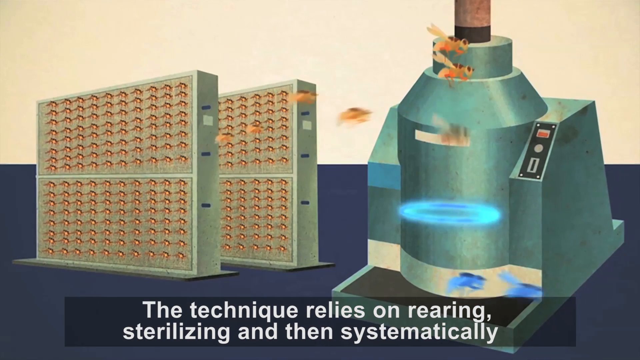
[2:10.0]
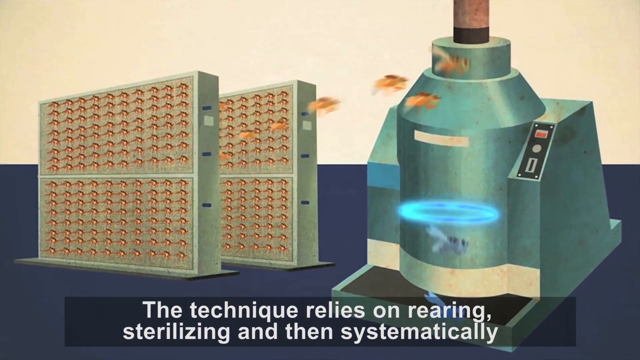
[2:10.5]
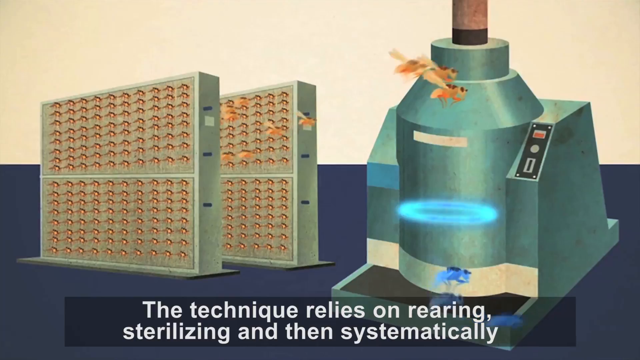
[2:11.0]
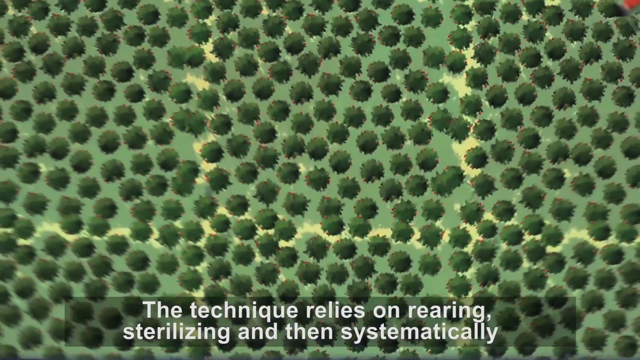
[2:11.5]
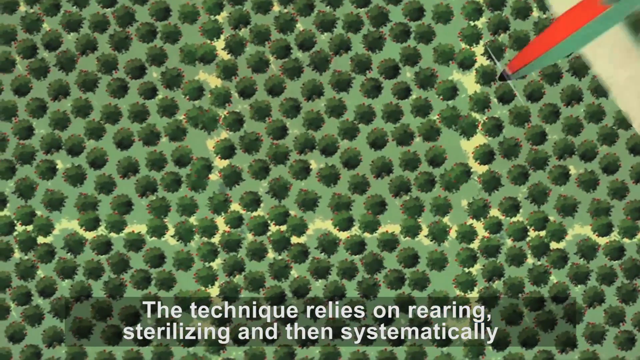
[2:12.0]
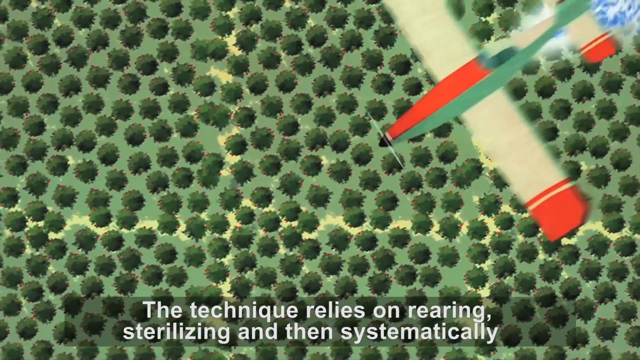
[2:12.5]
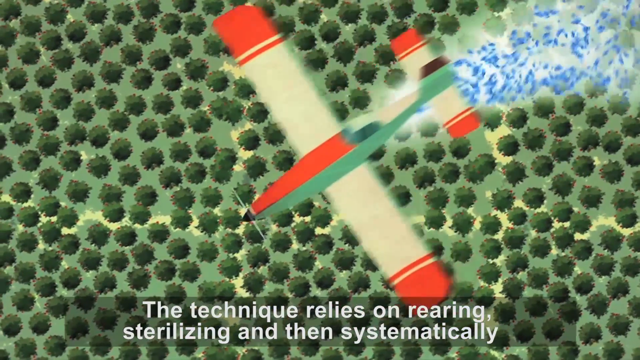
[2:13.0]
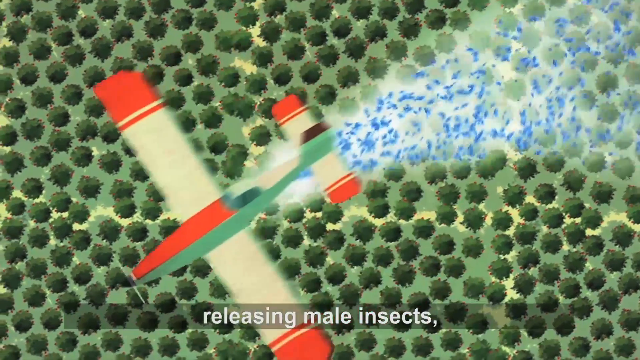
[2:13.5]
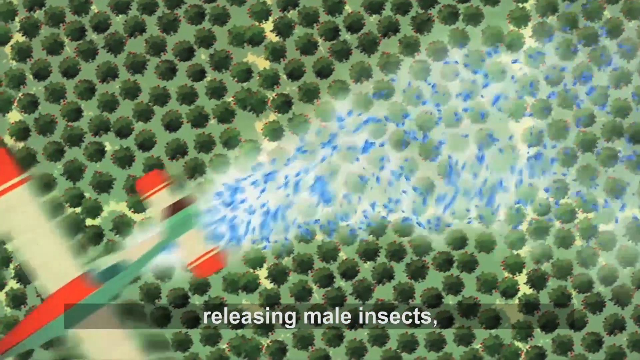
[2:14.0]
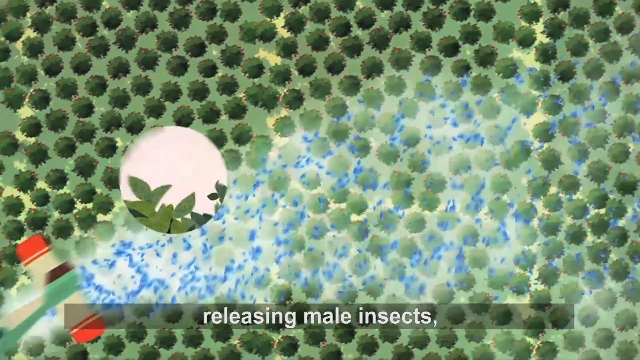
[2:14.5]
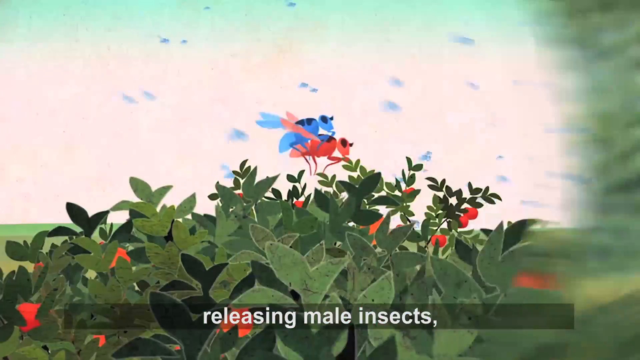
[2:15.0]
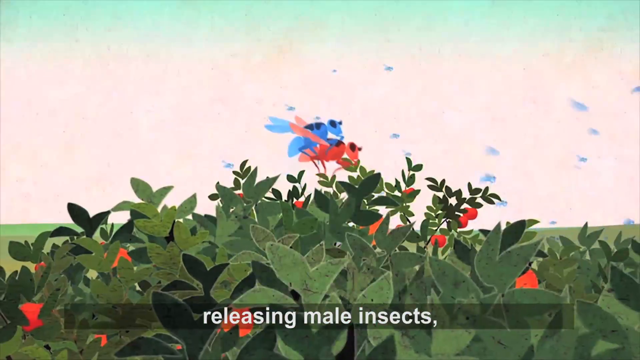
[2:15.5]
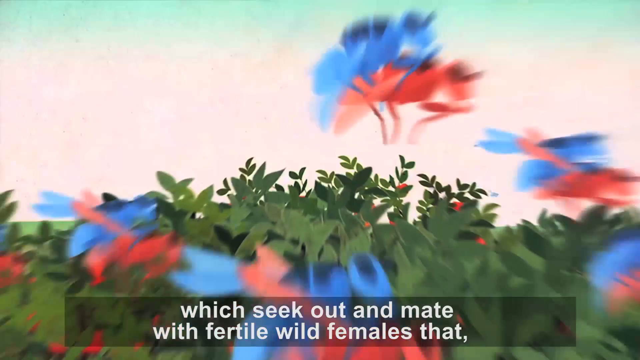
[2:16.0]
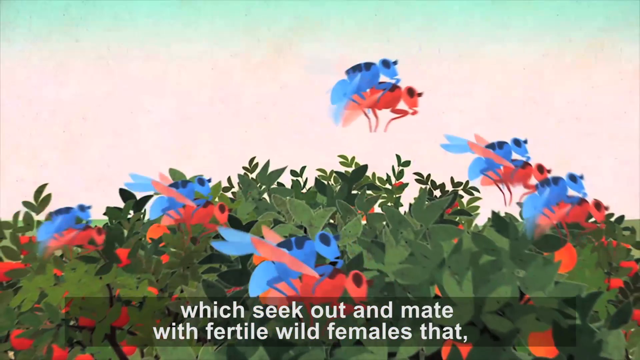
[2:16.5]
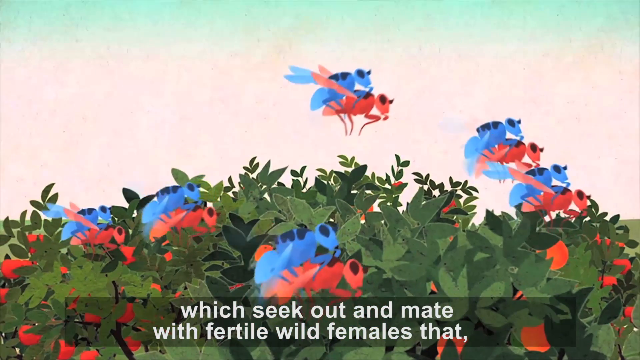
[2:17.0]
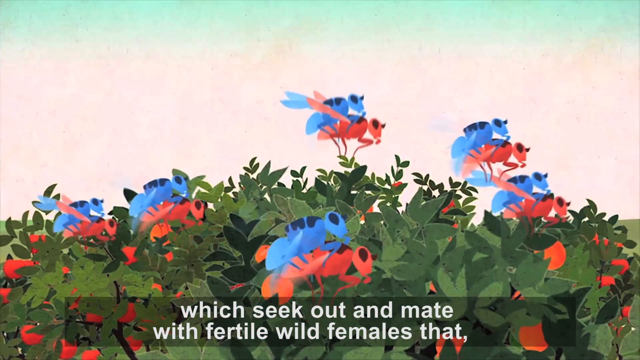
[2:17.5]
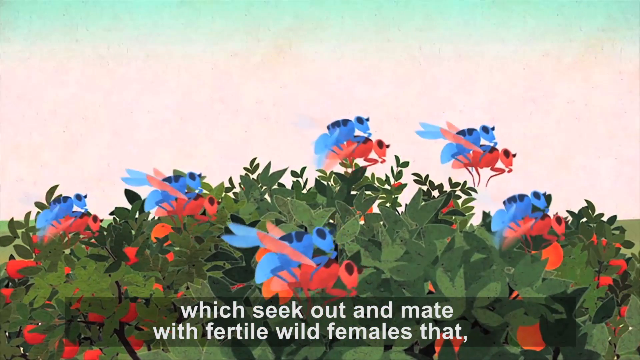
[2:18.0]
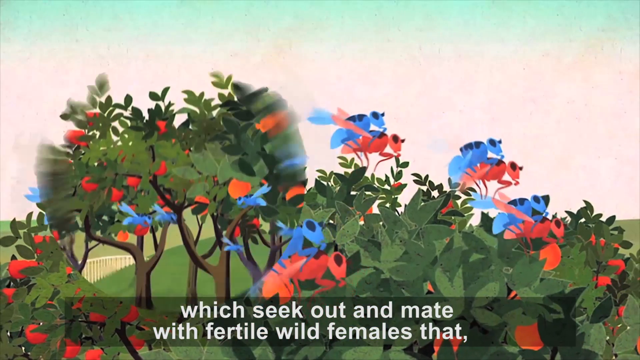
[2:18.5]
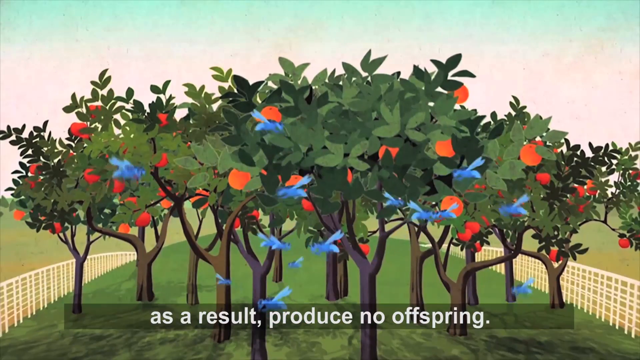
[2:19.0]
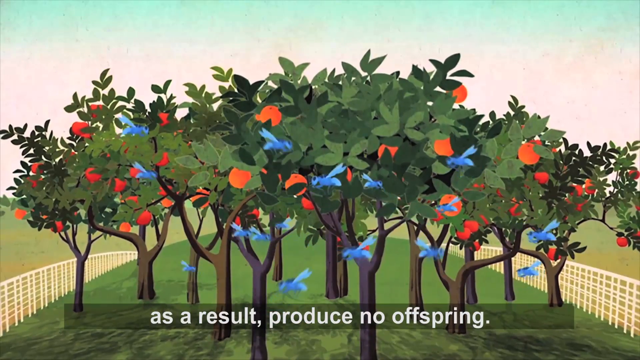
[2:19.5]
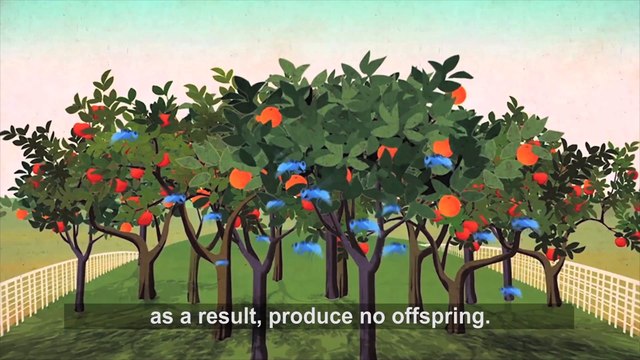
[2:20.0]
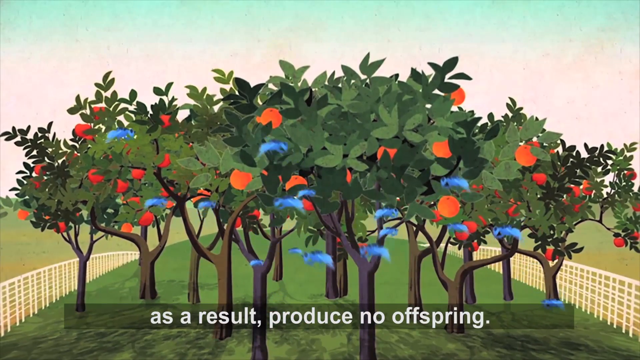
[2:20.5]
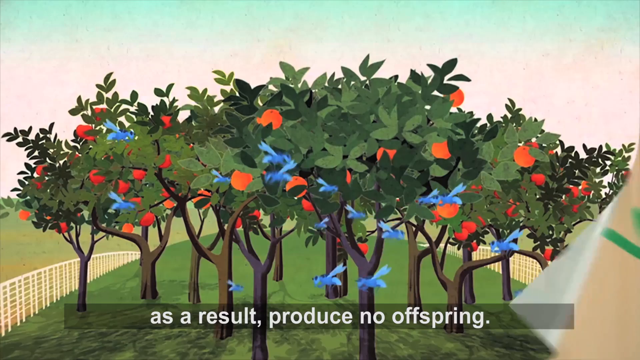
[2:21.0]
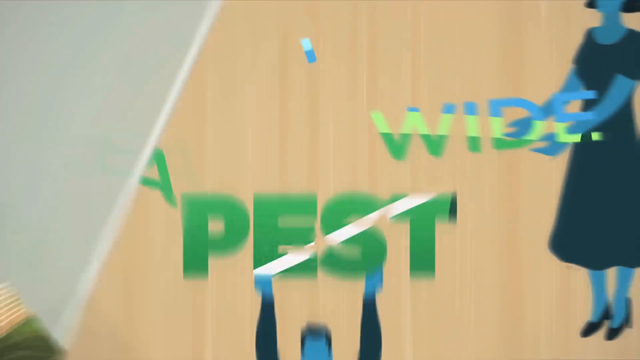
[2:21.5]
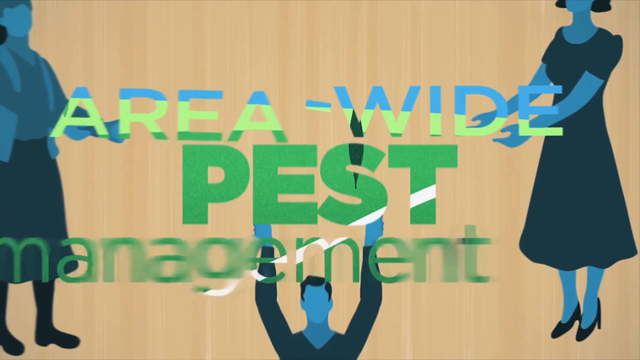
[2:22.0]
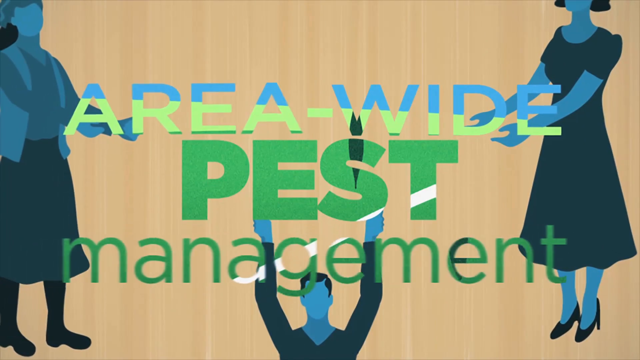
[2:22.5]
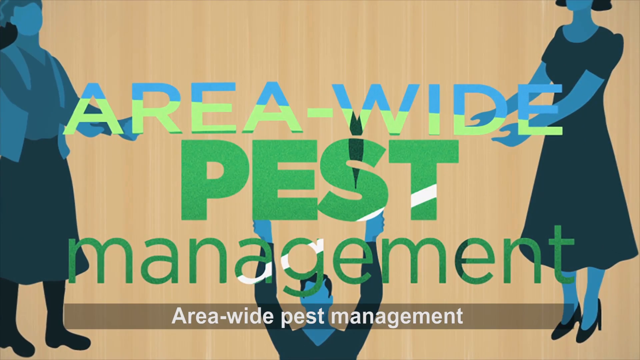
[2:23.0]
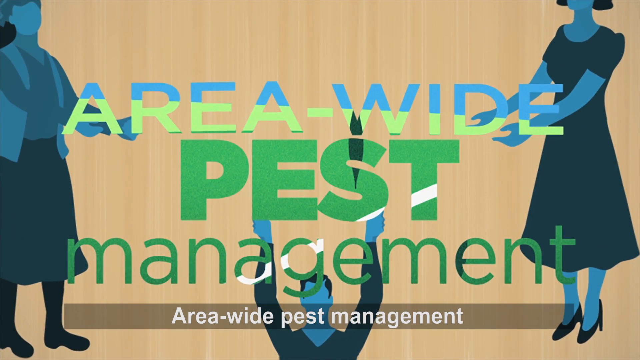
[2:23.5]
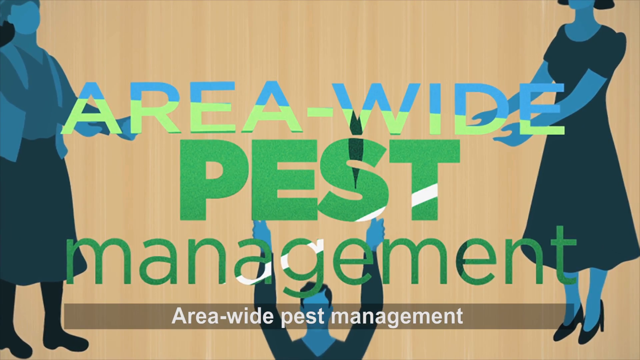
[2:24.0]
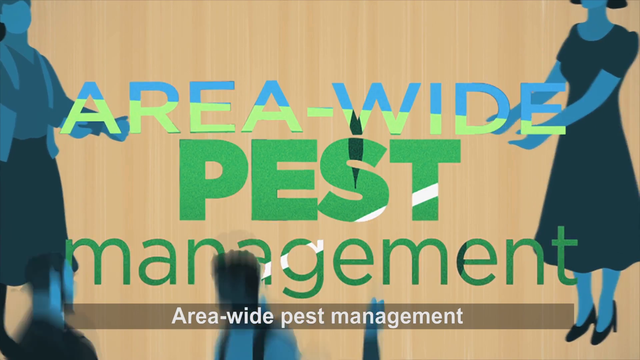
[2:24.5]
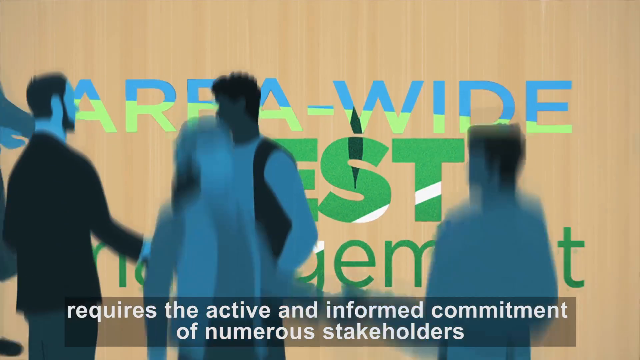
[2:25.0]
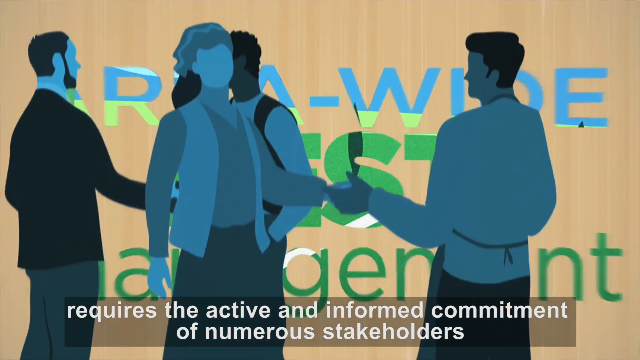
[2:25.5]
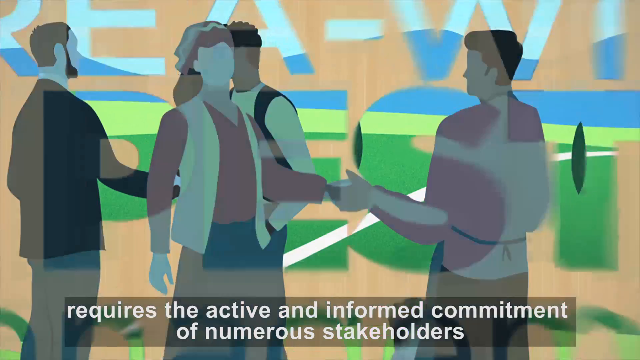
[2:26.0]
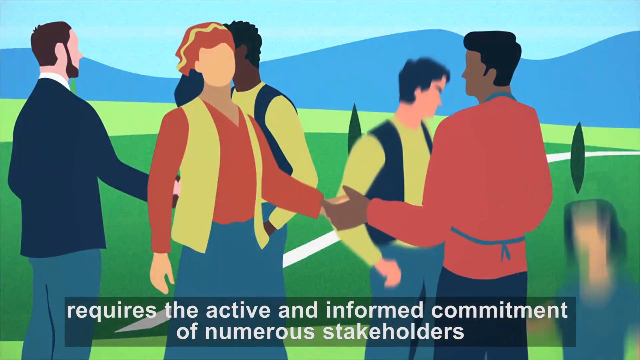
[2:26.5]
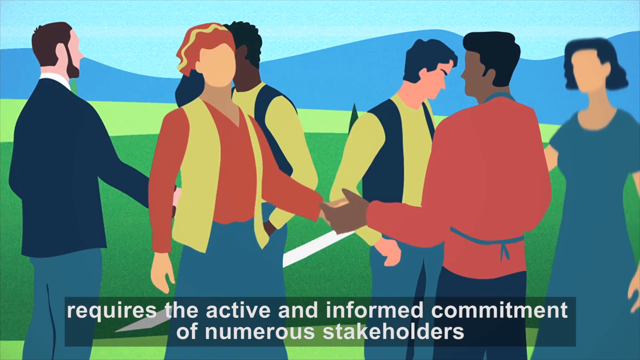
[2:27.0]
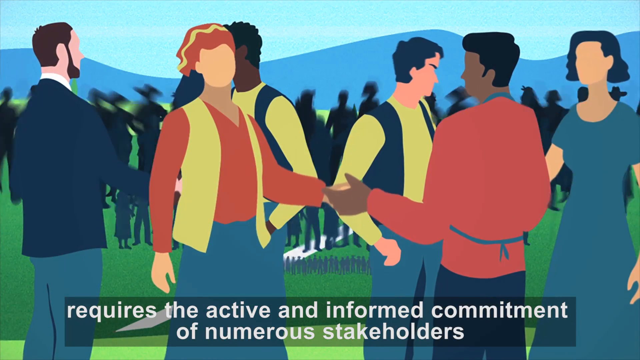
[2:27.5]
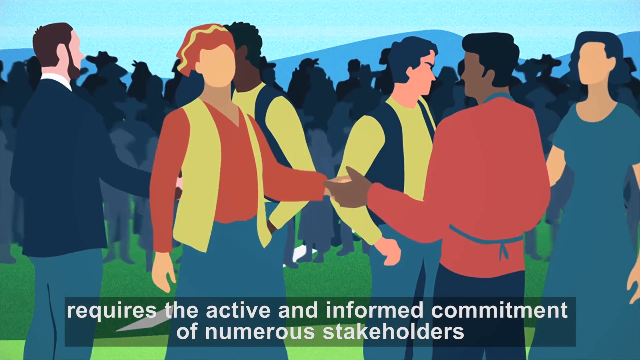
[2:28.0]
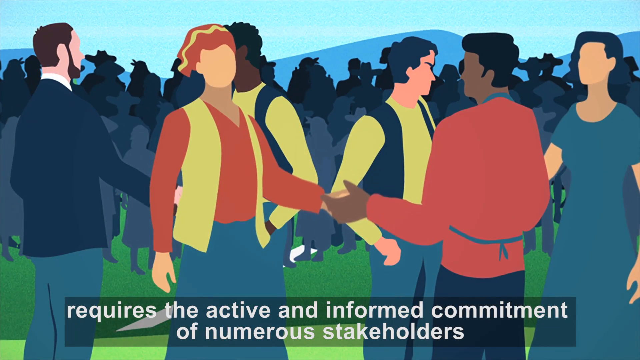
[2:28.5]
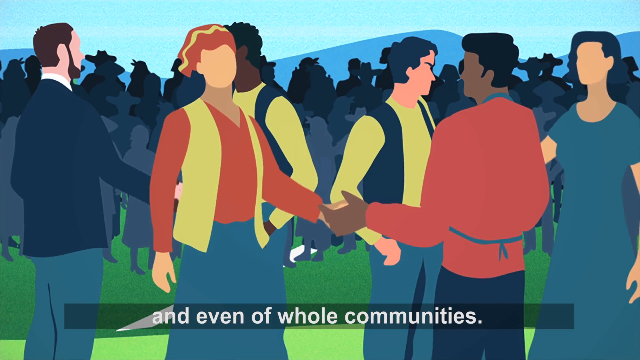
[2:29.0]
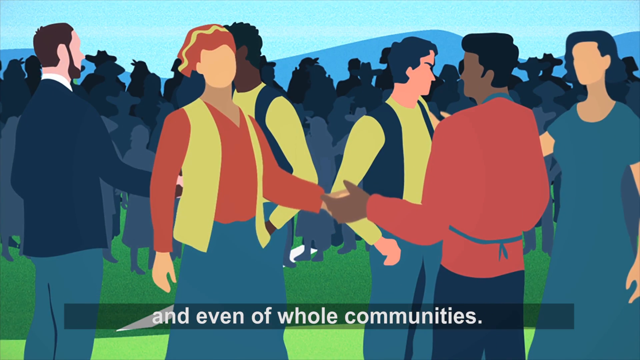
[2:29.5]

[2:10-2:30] The bugs fly into the machine and are treated with the blue light or something similar. The scene cuts to these blue bugs, apparently treated with something, possibly irradiated, being released from a plane. The blue treated bugs are then seen mating with what are apparently untreated bugs in the local area. The "area-wide pest management" message appears, followed by a scene of people shaking hands: the bearded man in the suit shakes hands with one of the farmers wearing a blue waistcoat, the woman with the band in her hair shakes hands with another man, and two other people shake hands in the background. Many more people are congregated, seemingly engaged in some sort of discussion.